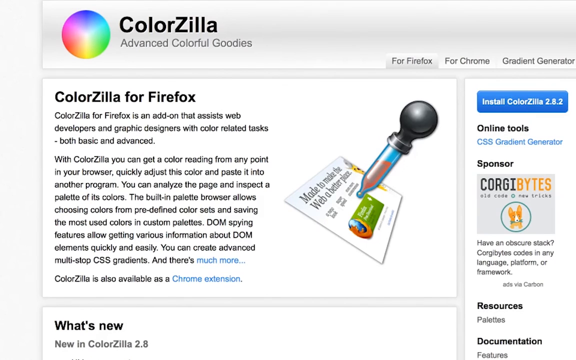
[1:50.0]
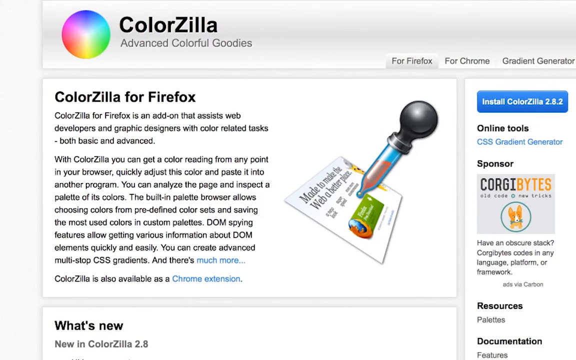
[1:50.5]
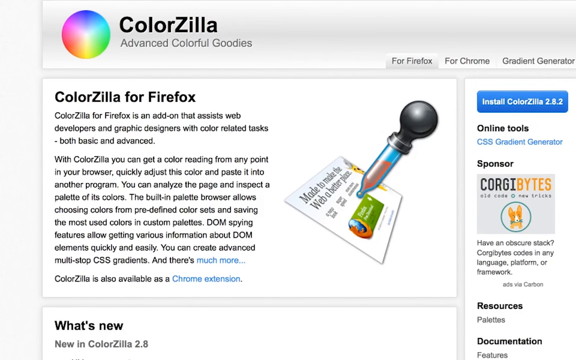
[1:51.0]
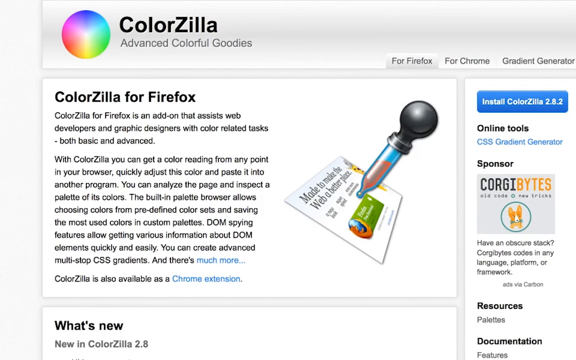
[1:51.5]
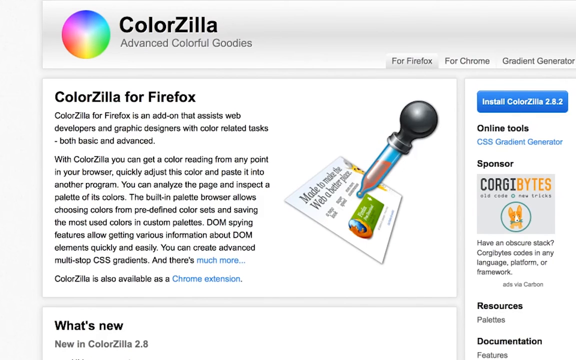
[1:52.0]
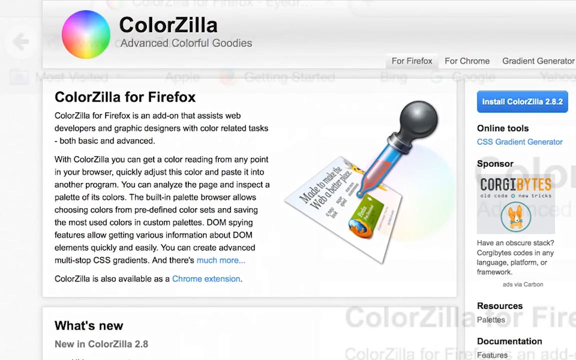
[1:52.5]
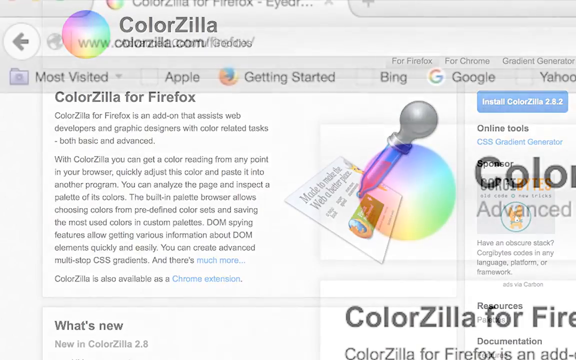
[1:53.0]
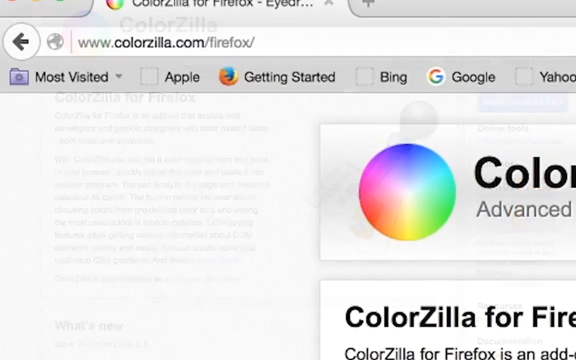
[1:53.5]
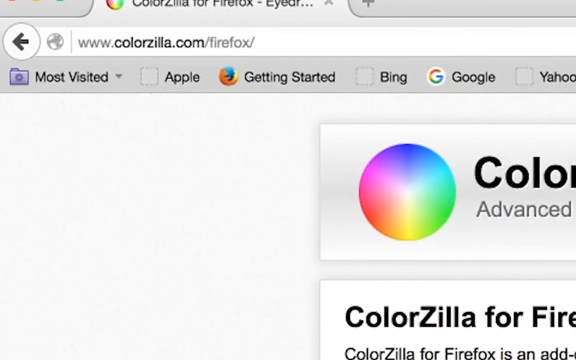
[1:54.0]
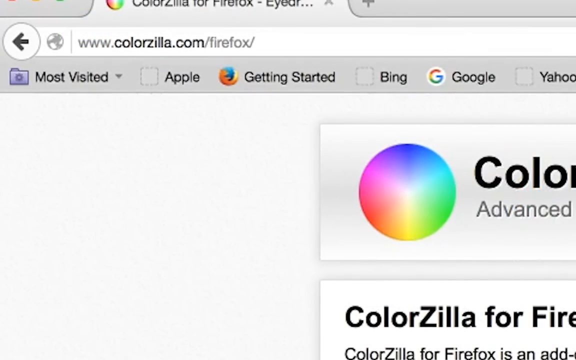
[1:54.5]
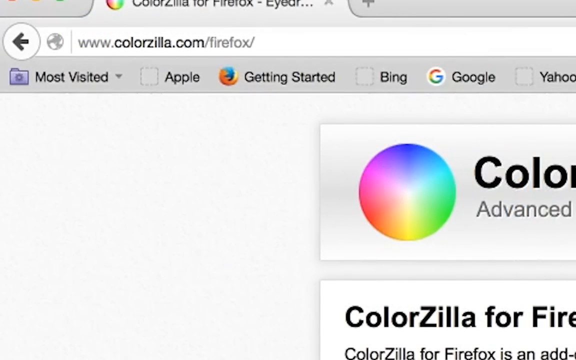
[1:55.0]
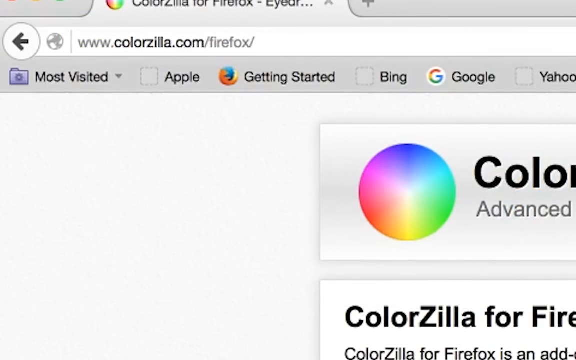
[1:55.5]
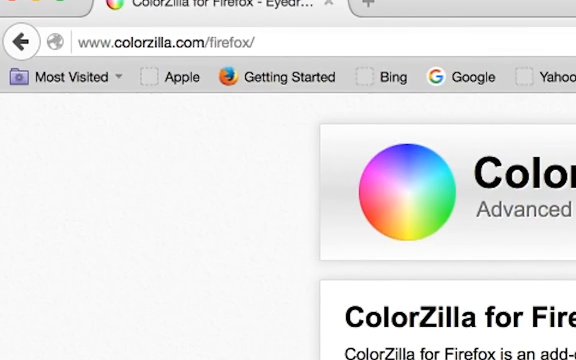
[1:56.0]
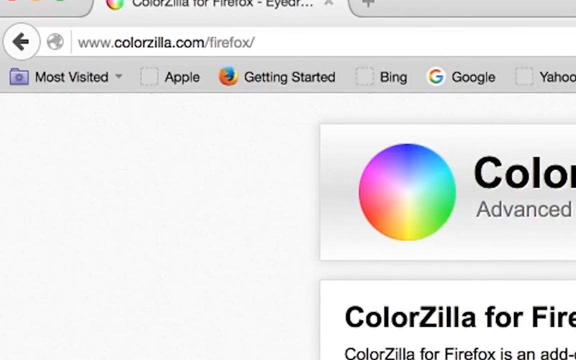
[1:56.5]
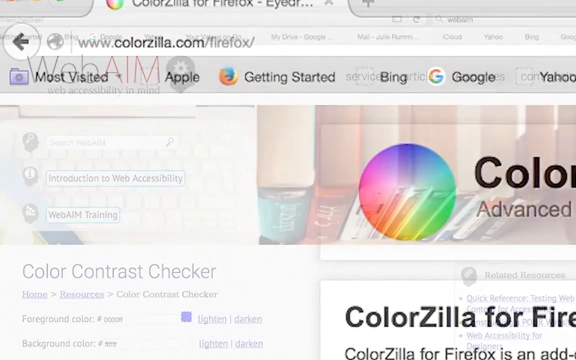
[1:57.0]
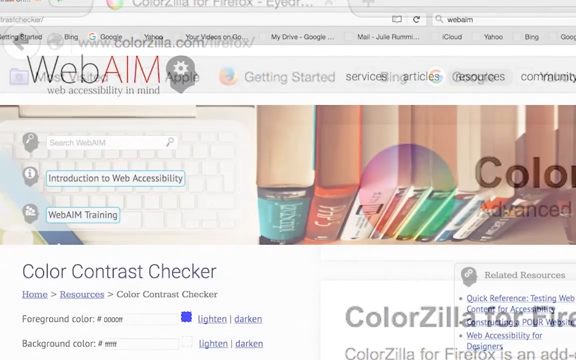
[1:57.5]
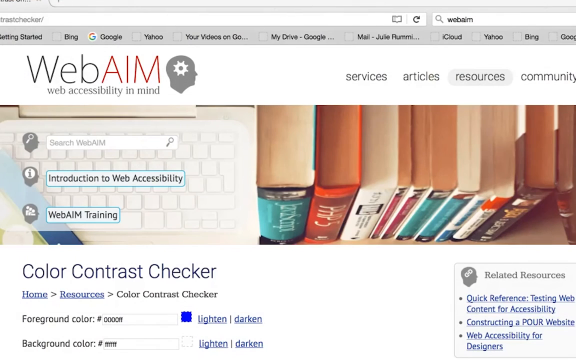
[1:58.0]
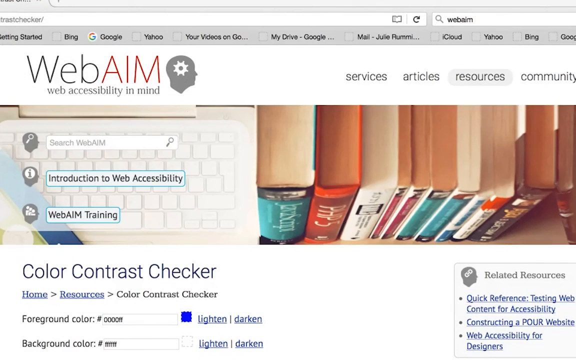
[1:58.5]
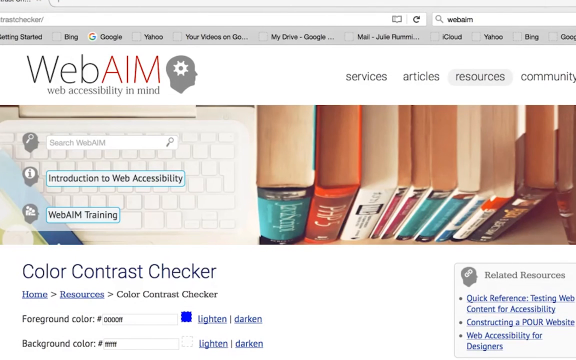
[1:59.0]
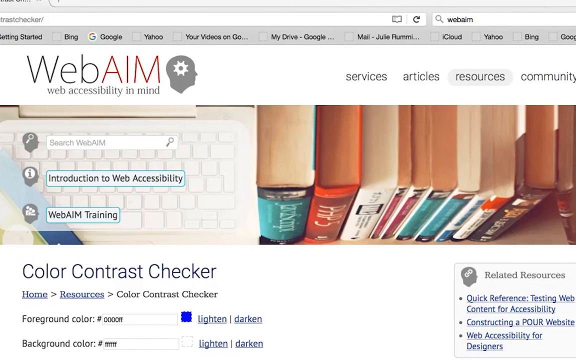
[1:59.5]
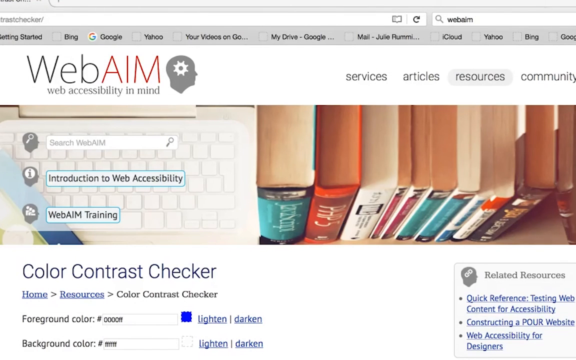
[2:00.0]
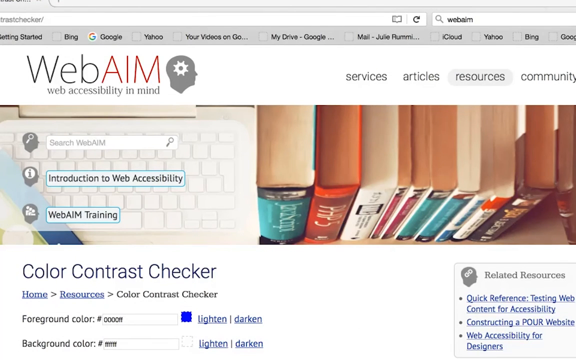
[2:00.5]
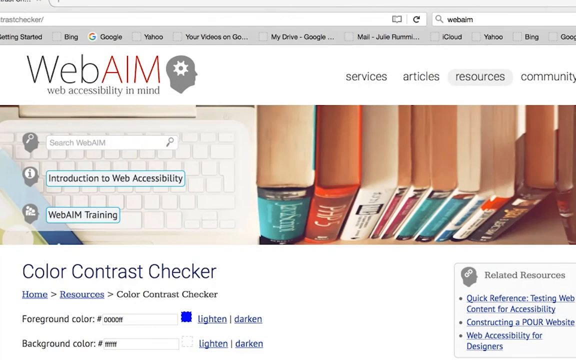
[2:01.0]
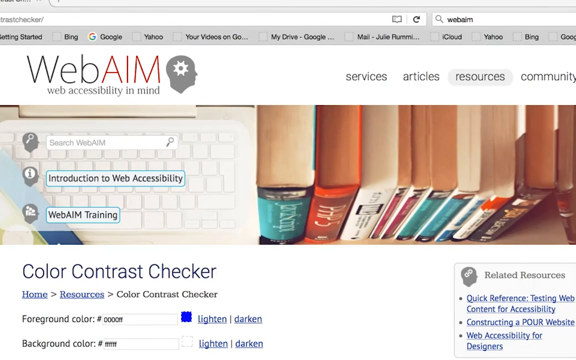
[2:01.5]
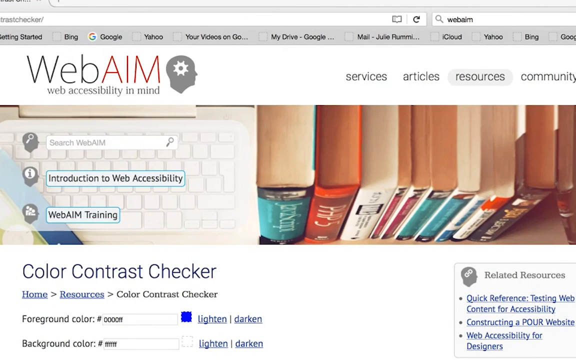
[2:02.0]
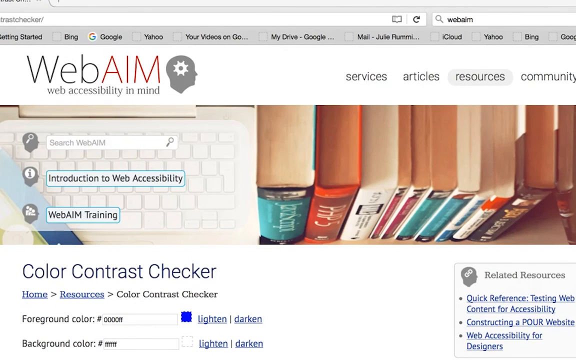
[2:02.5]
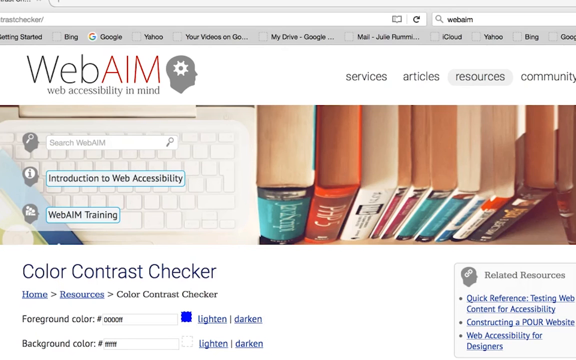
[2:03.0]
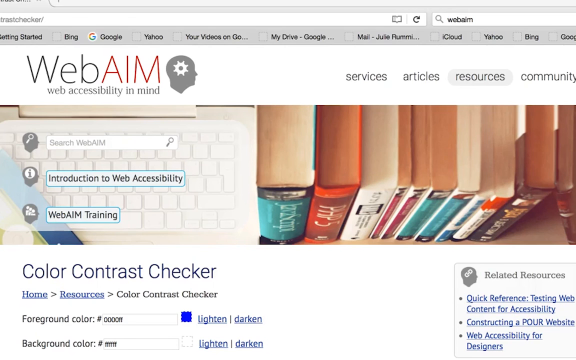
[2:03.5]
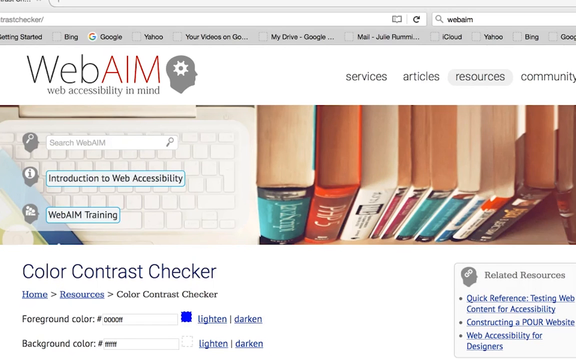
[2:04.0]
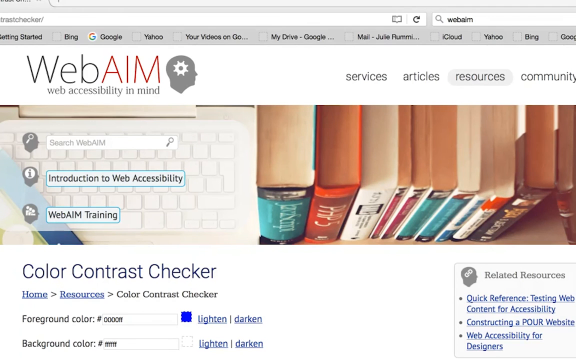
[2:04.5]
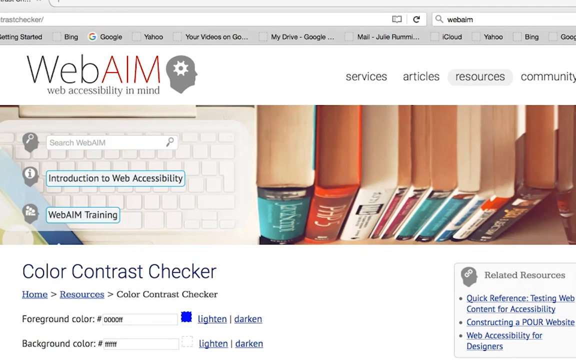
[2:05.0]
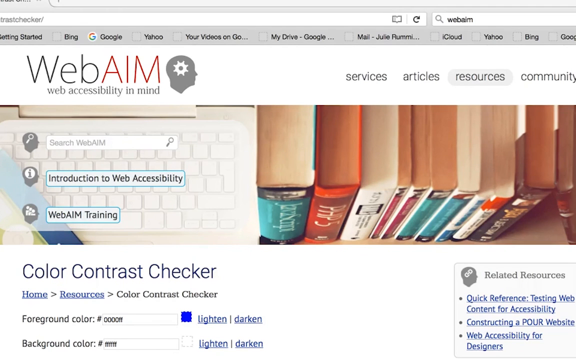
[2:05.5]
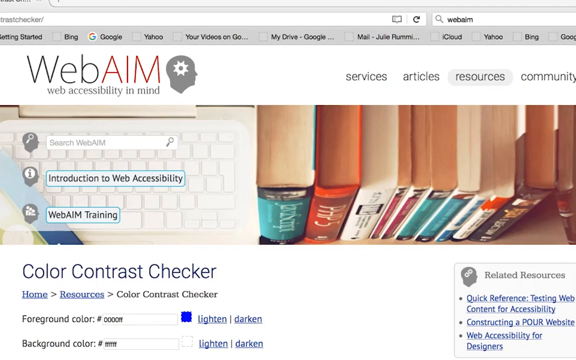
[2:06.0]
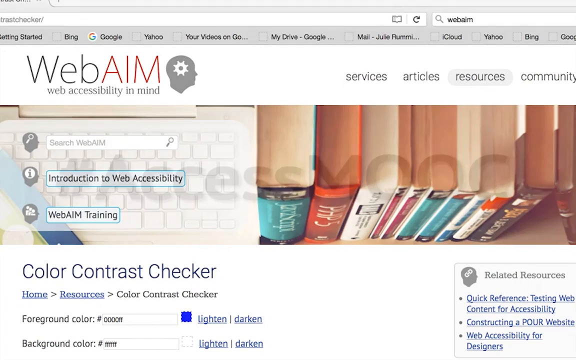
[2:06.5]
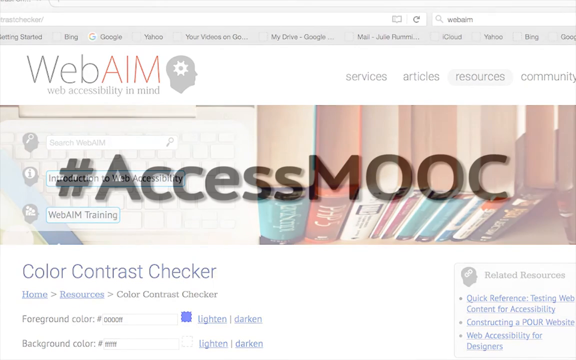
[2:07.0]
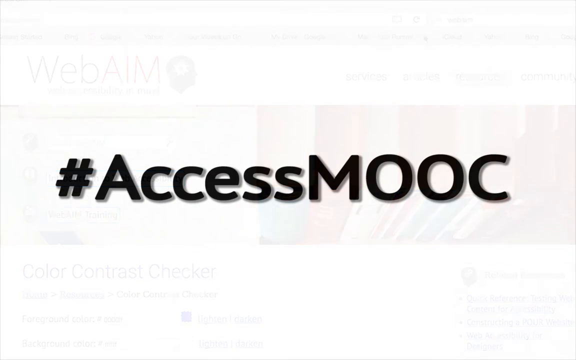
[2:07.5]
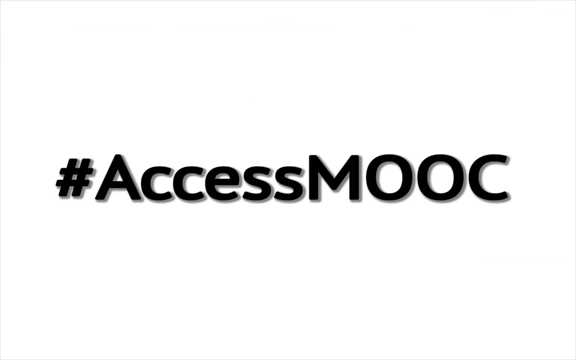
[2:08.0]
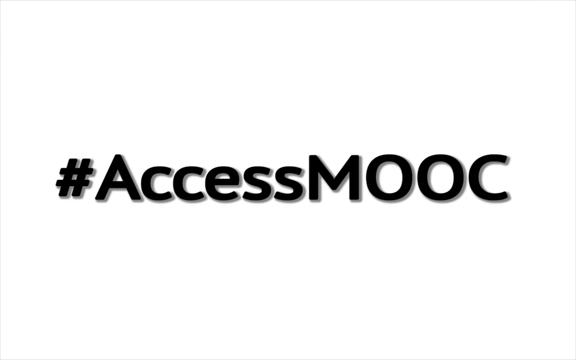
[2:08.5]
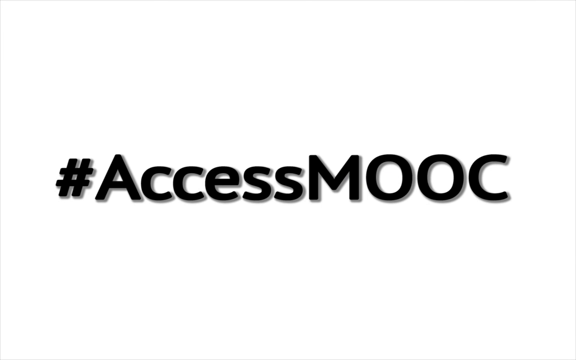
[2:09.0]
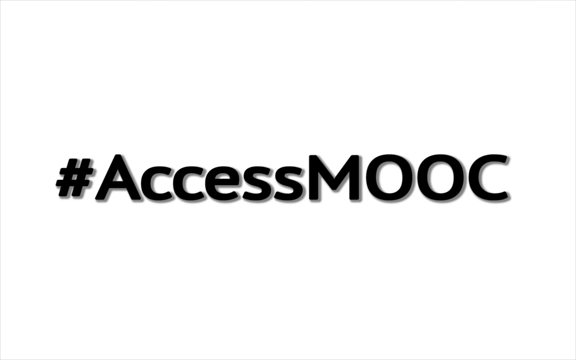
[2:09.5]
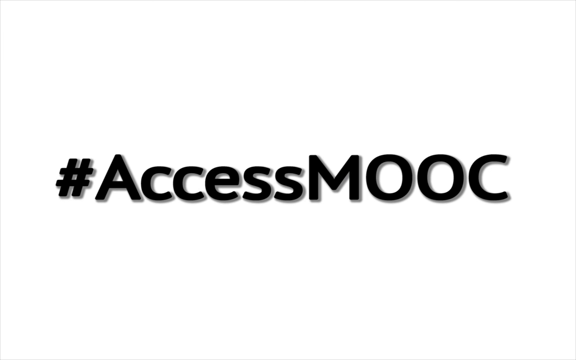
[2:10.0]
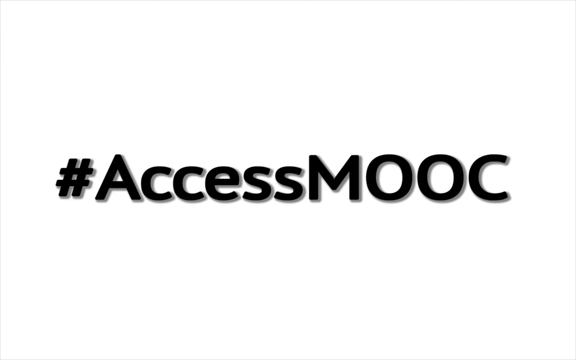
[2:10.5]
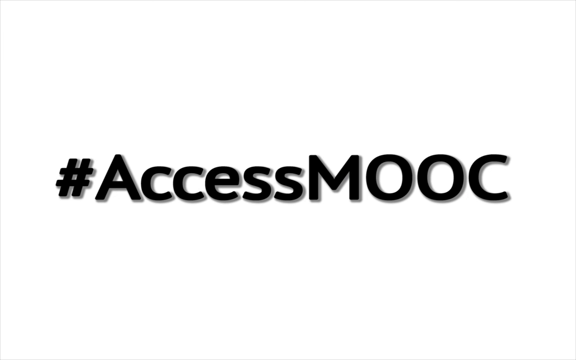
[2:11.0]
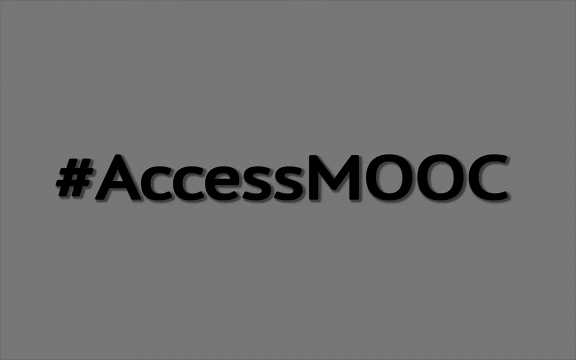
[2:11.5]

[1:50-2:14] The ColorZilla Advanced Colorful Goodies web page is shown, its logo a circle of vibrant, neon-like colors. There are tabs for Firefox, which is open, Chrome, and Gradient Generator. Below that is an install button for ColorZilla 2.8.2 and "OnlineTools CSS Gradient Generator." To the left is a write-up for ColorZilla for Firefox, and to the right of it, within the section, is a bulb, a dropper, and what looks like a business card with text and the Mozilla Firefox logo. The video transitions to a close-up of the browser tab showing the web addresses www.colorzilla.com and www.firefox.com. Beneath it are tabs for most visited, Apple, getting started, Bing, Google, and Yahoo. The video then transitions to the WebAIM website, with its logo of a human head in profile with a cogwheel inside and the words "Web Accessibility in Mind" alongside its name and logo.